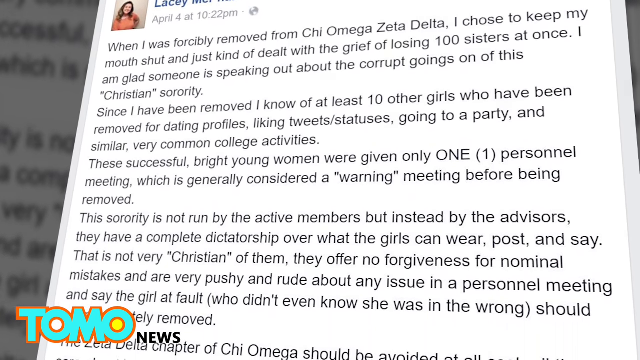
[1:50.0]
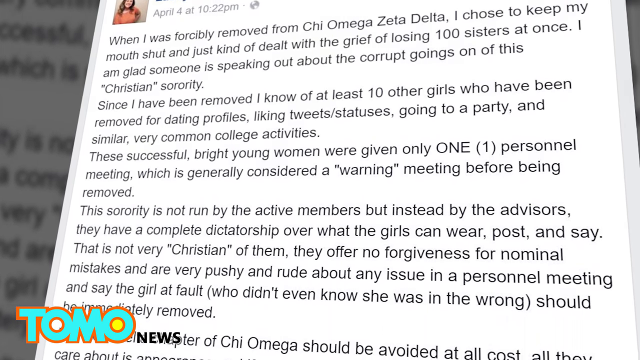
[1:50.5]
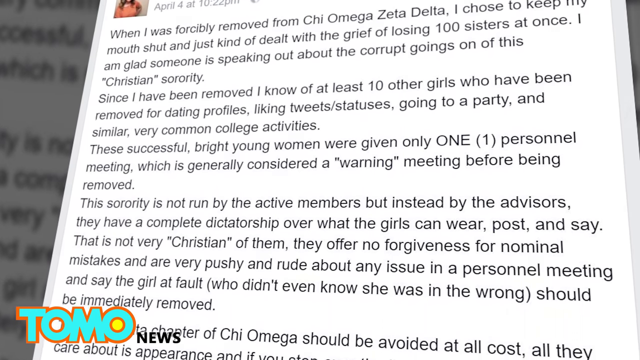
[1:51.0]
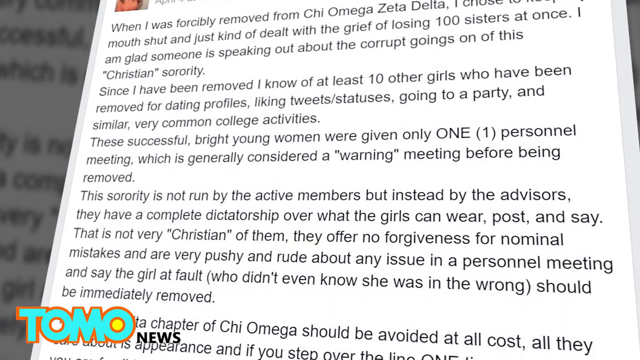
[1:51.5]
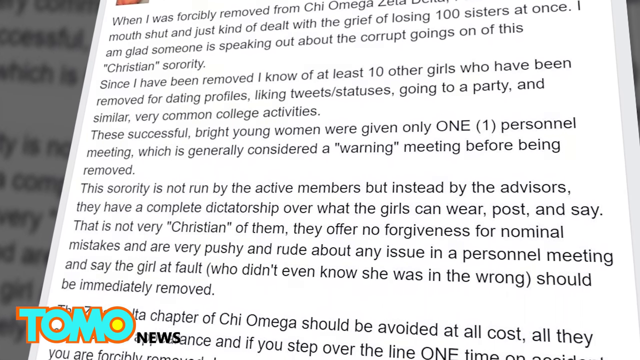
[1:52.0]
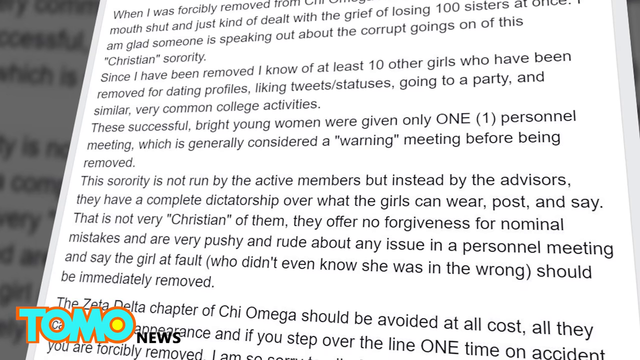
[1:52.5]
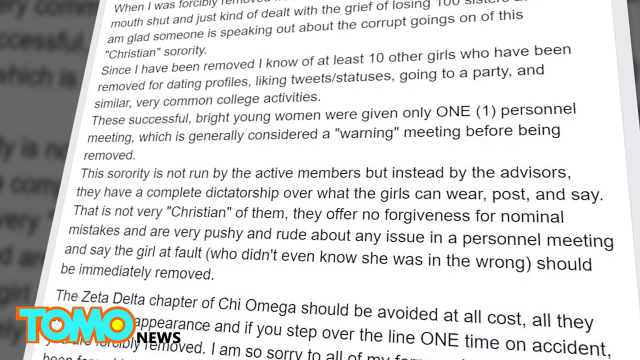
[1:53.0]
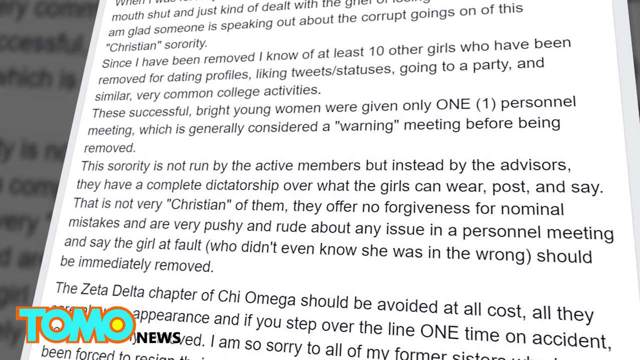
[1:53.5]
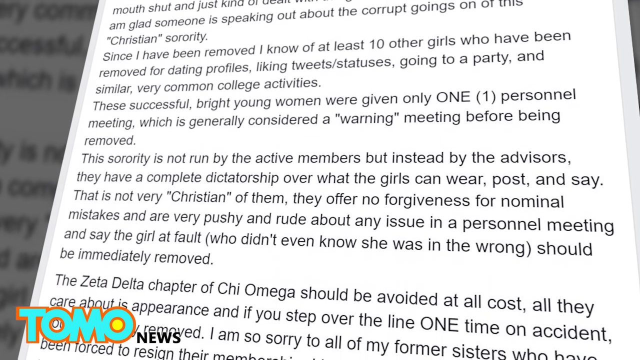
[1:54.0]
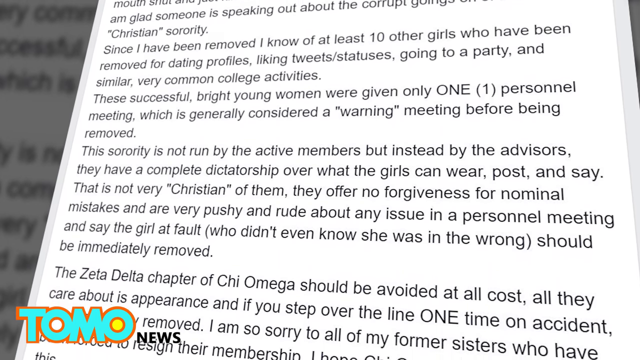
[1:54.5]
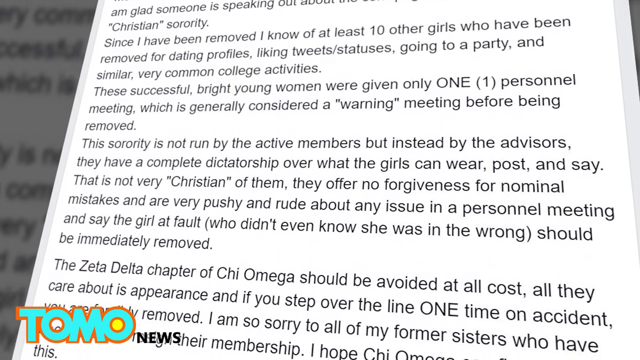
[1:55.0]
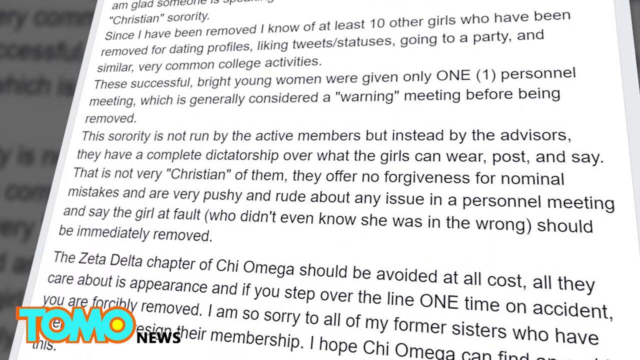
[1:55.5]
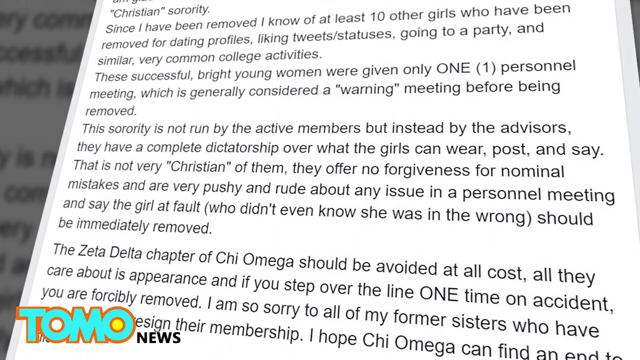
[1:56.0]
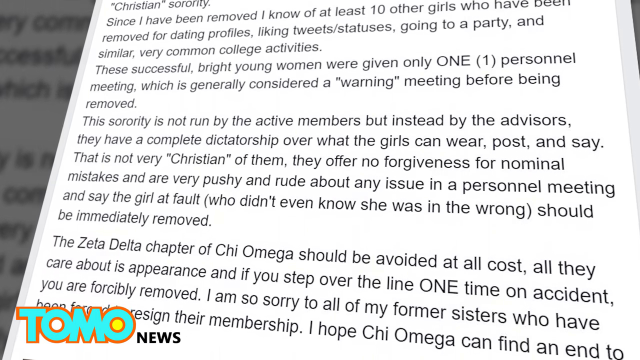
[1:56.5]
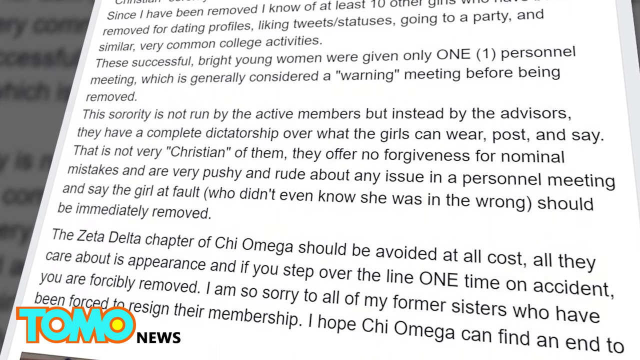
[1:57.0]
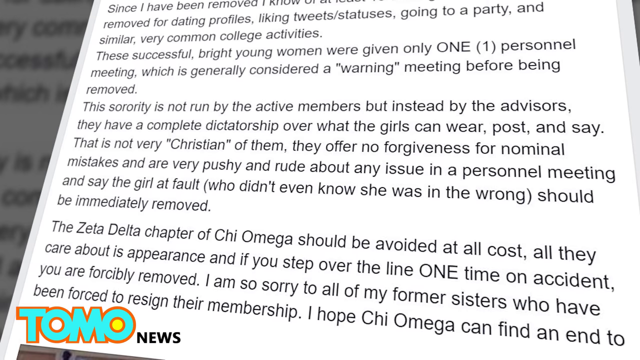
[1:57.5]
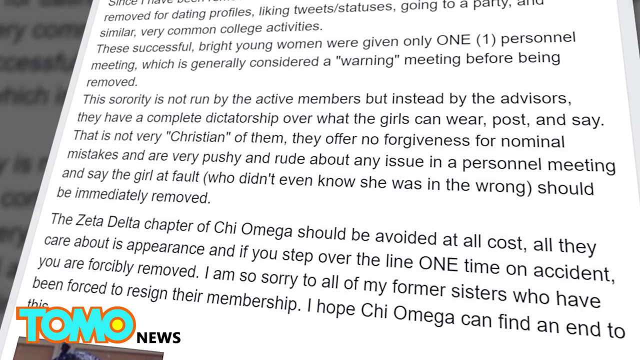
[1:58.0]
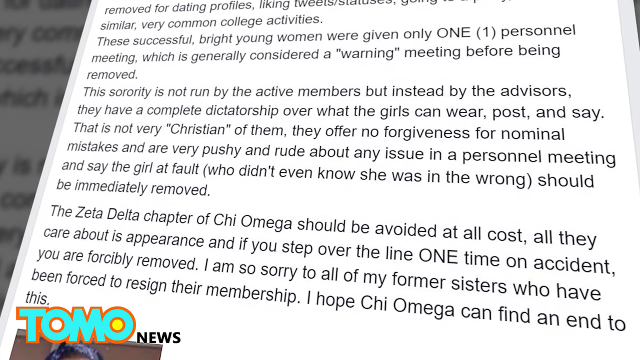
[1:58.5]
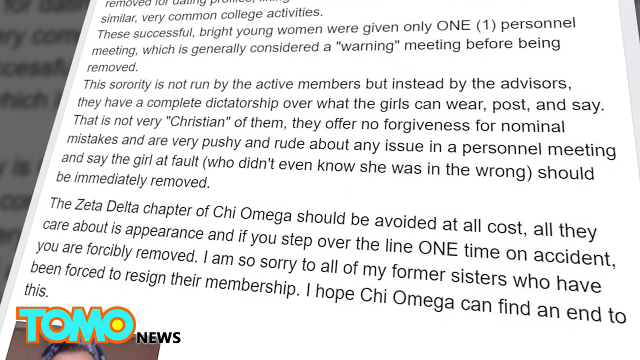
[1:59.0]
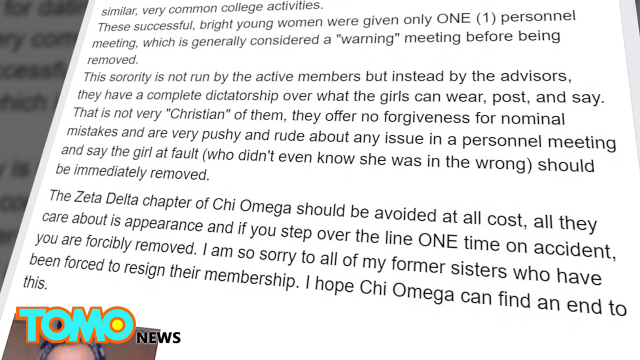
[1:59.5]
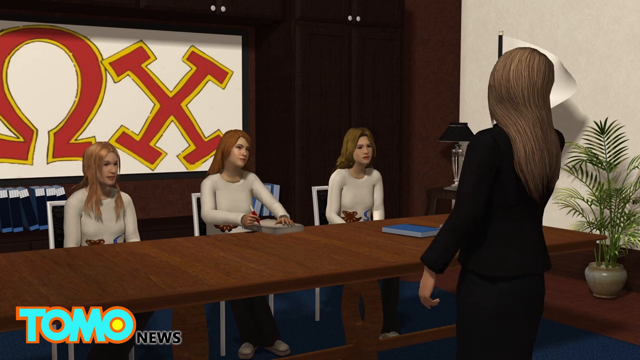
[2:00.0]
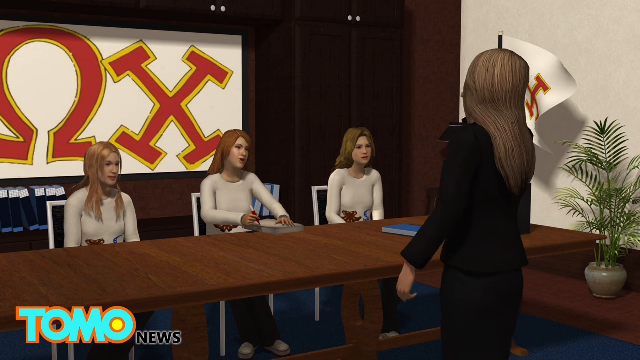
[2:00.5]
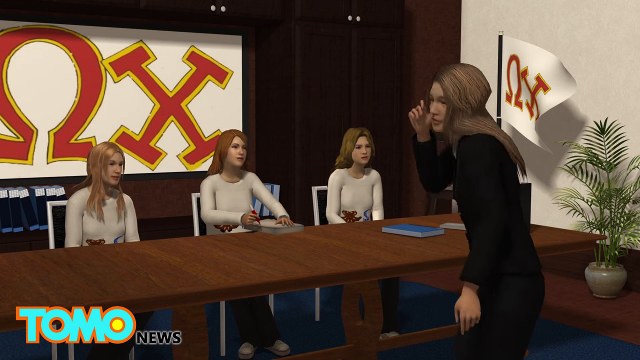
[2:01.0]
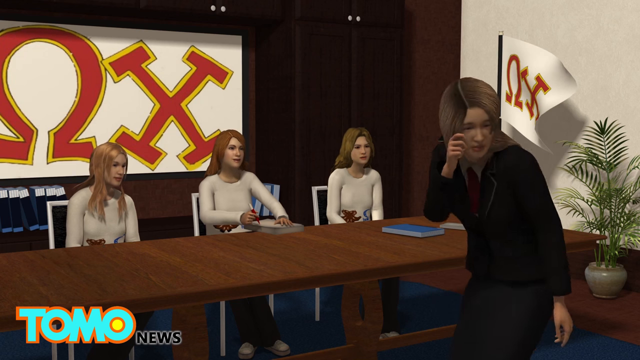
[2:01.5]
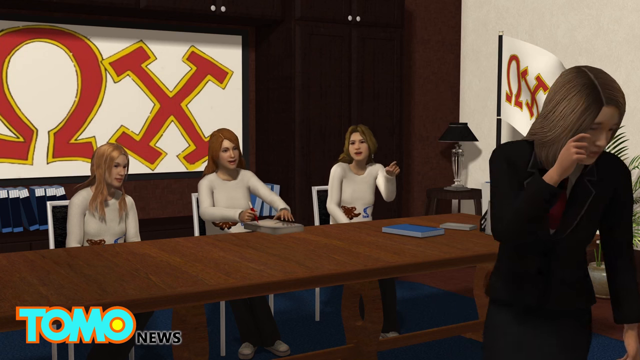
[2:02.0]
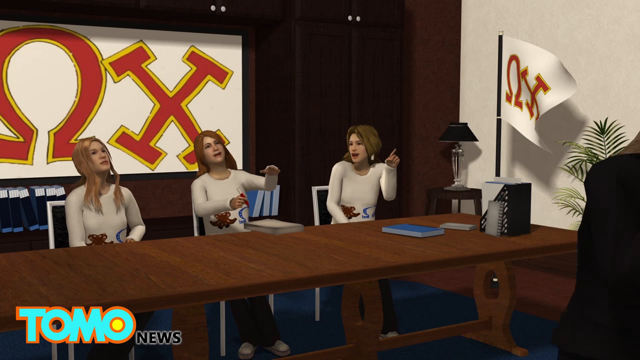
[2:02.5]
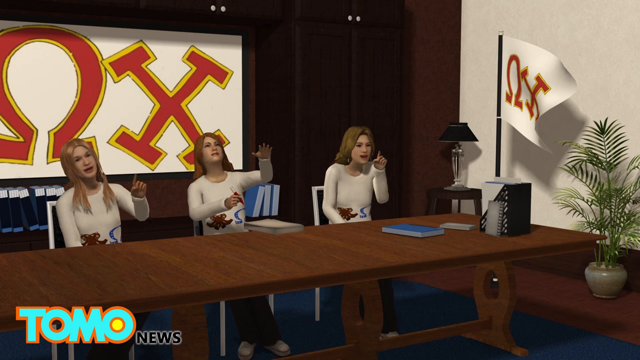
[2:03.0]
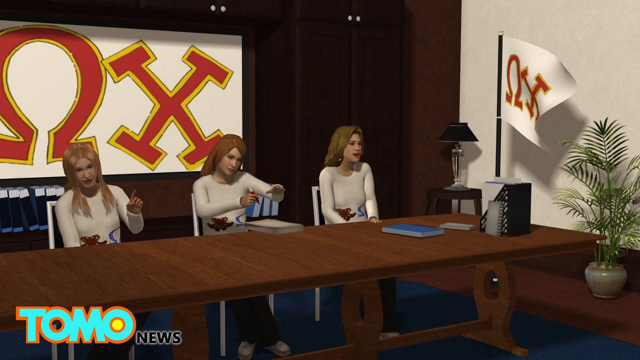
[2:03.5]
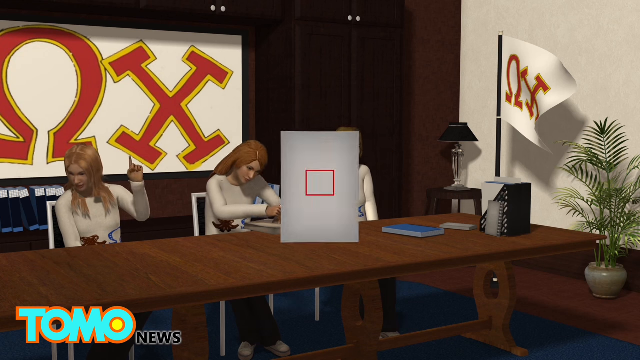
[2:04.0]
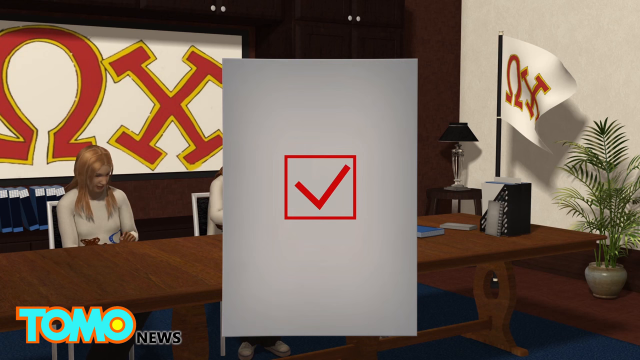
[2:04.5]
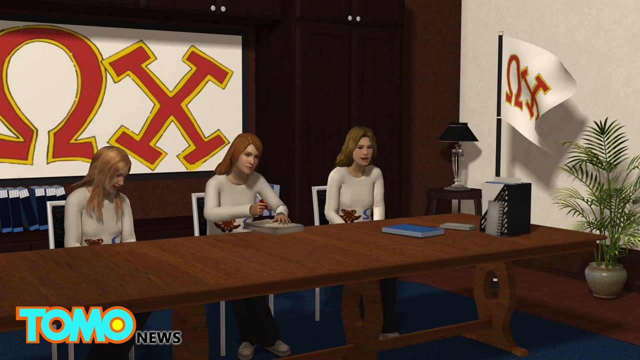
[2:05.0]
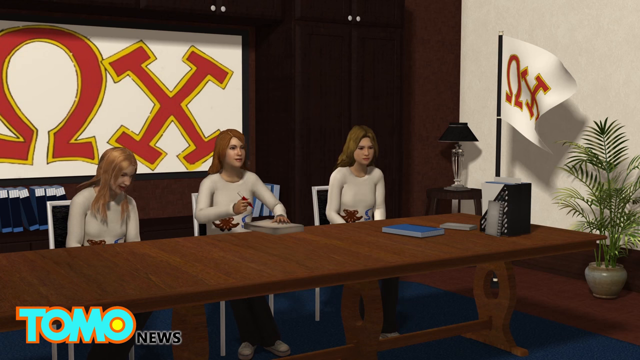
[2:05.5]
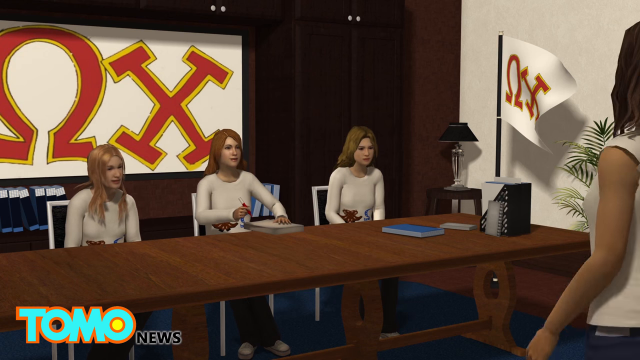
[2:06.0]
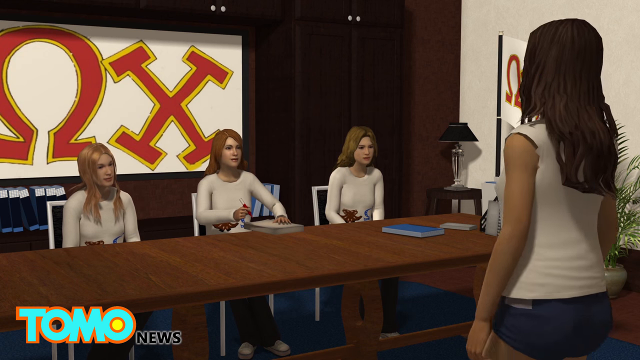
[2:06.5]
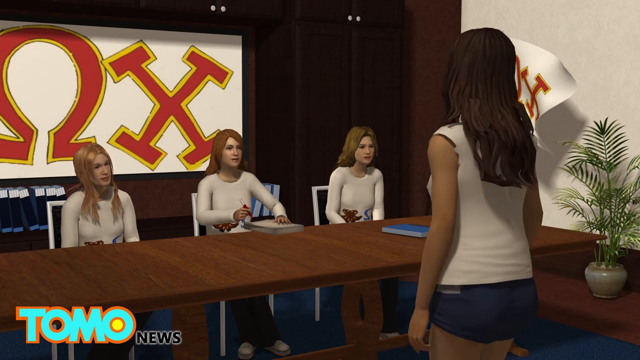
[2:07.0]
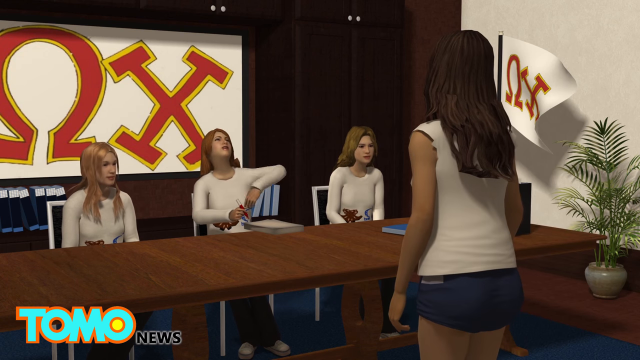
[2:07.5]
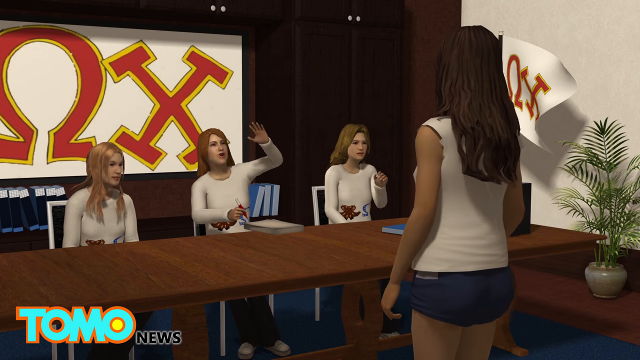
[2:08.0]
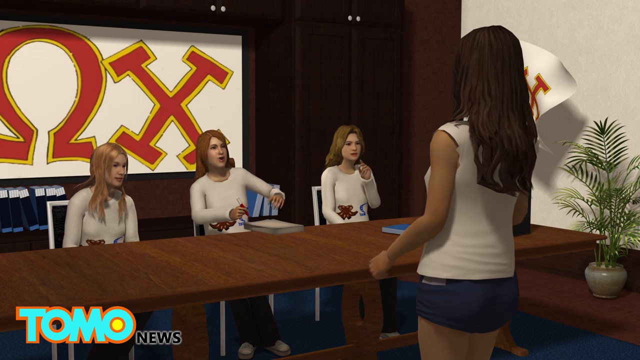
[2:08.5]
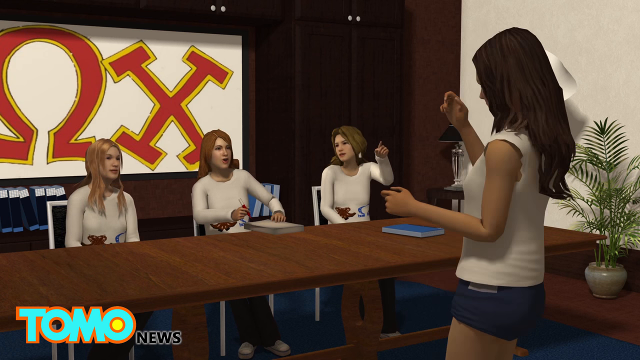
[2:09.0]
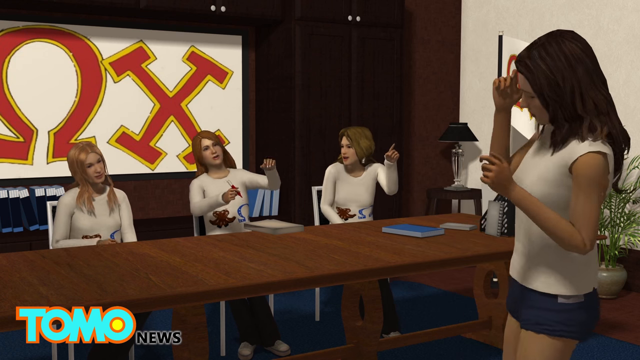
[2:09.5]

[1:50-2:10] A social media post by a woman named Lacey, dated April 4th, concerns being forcibly removed from Chi Omega Delta Zeta, apparently a sorority; it seems many people were let go, and she alleges some kind of corruption. The camera pans down across the multi-paragraph post. The scene then changes to a computer-generated image with Greek letters, presumably the Chi Omega logo, on a banner on a wall and on a flag. Three young girls sit in different chairs in front of a table. In this animation, the three girls lean back and lift their arms as if they have just been talking. They all wear shirts of the same color.